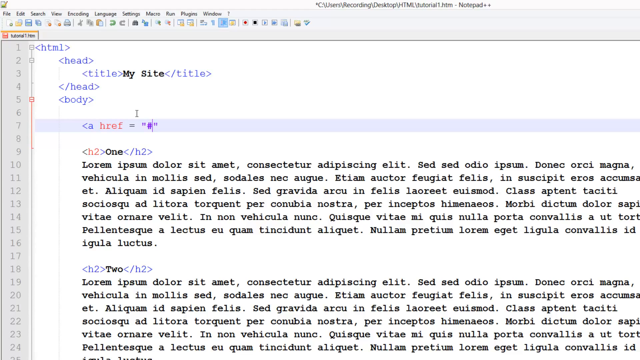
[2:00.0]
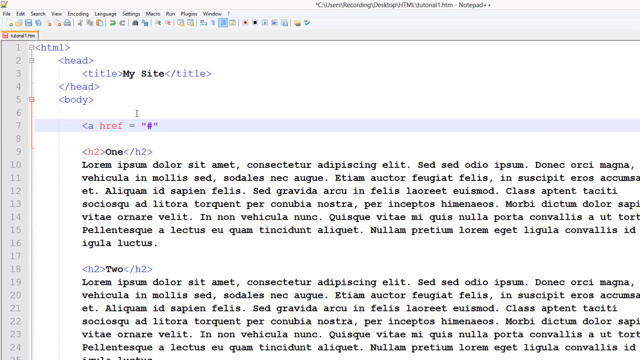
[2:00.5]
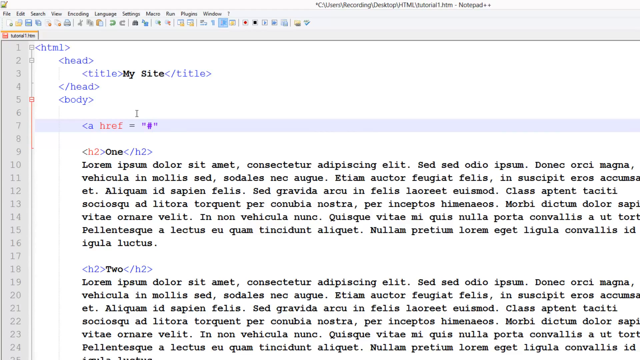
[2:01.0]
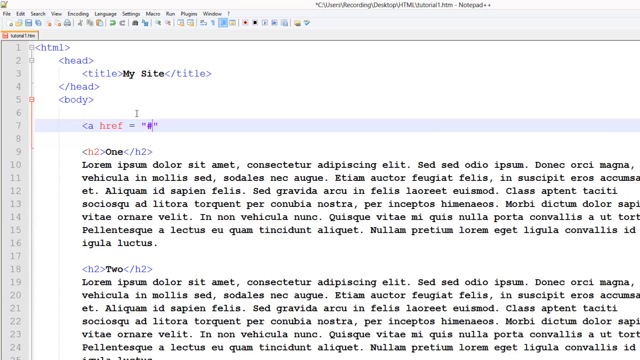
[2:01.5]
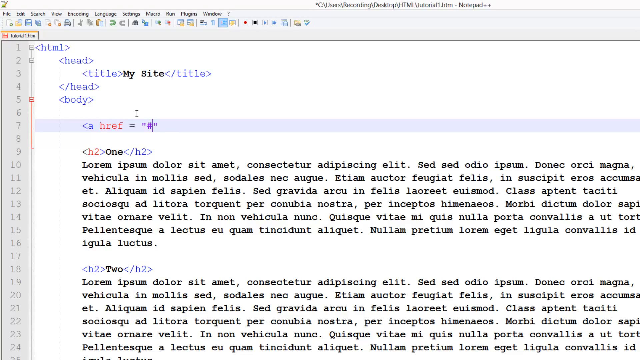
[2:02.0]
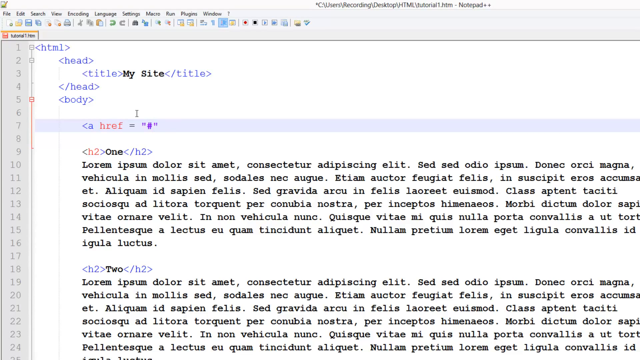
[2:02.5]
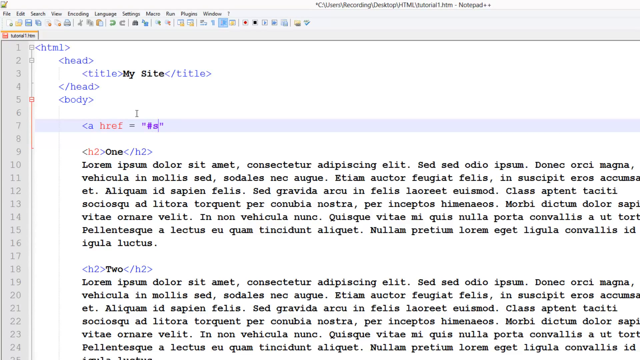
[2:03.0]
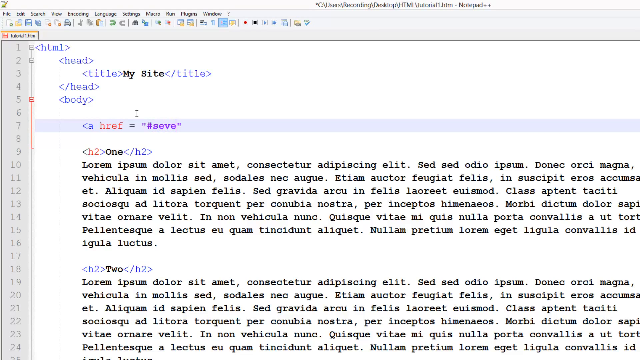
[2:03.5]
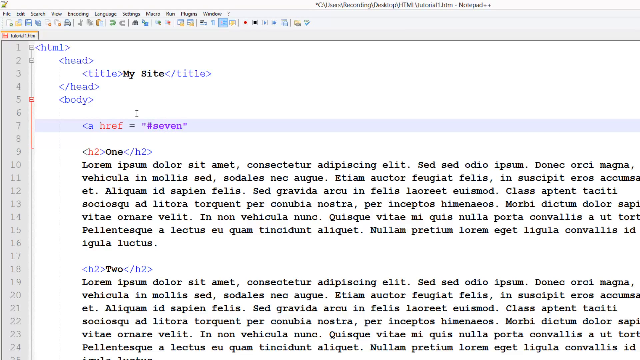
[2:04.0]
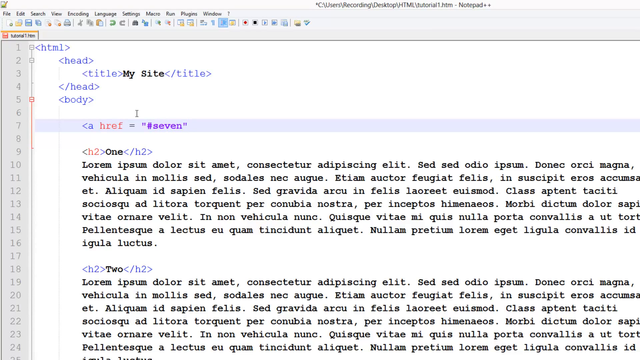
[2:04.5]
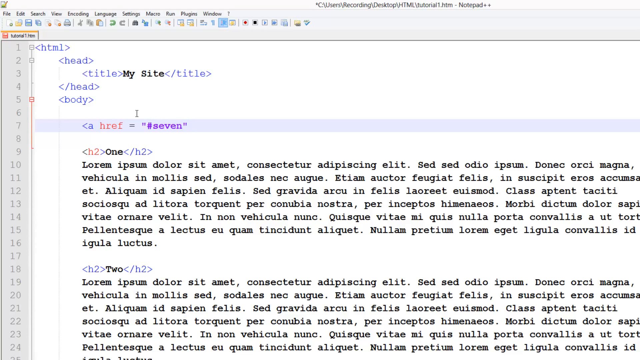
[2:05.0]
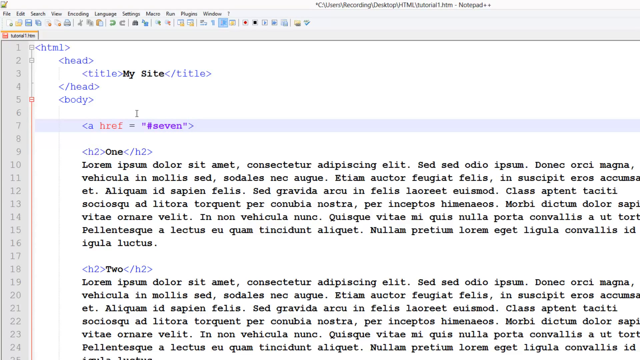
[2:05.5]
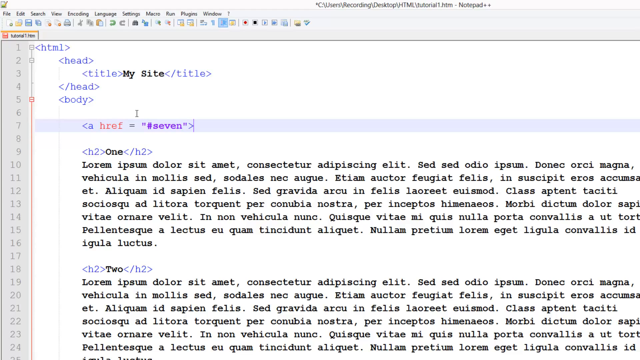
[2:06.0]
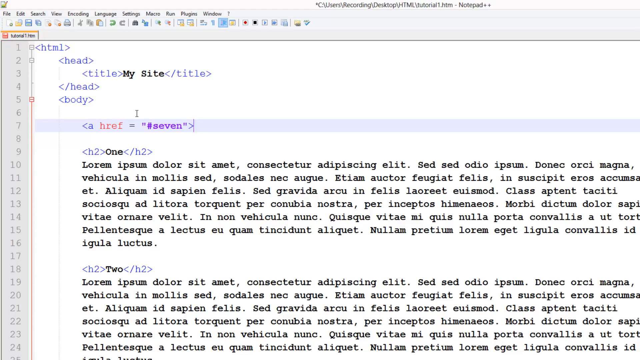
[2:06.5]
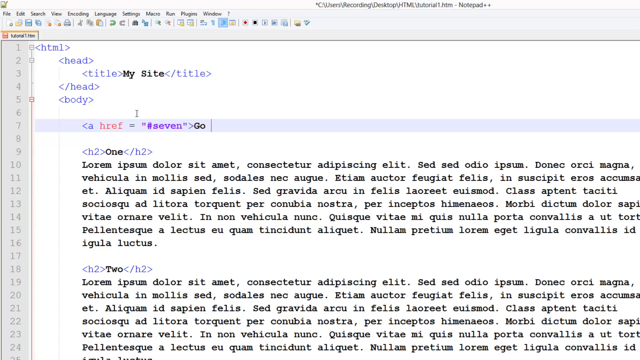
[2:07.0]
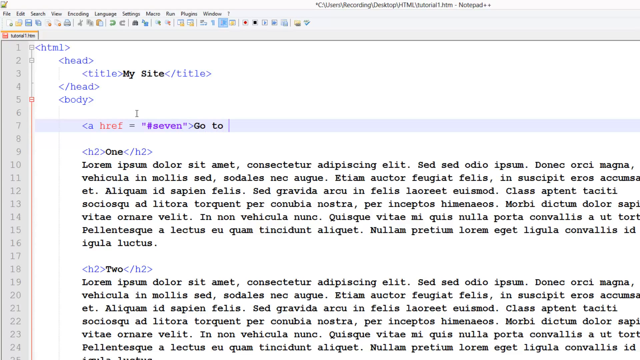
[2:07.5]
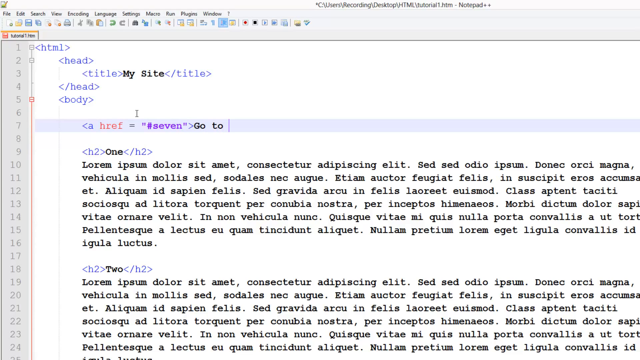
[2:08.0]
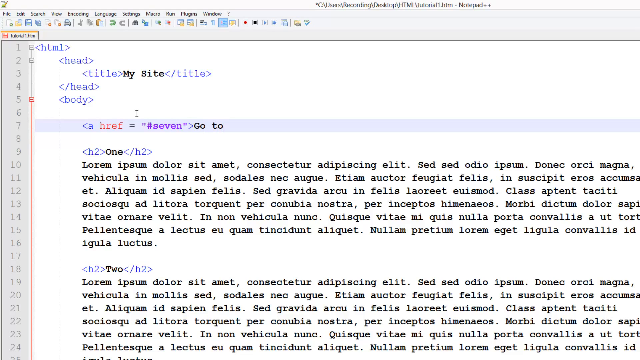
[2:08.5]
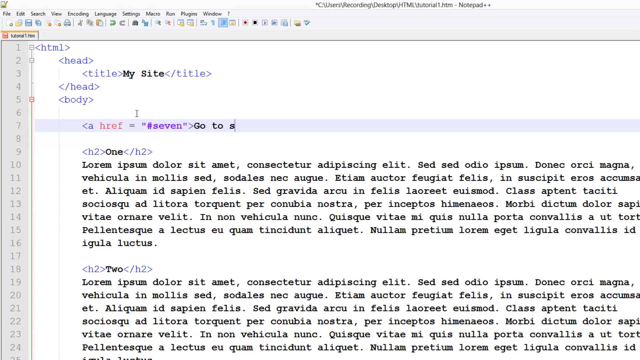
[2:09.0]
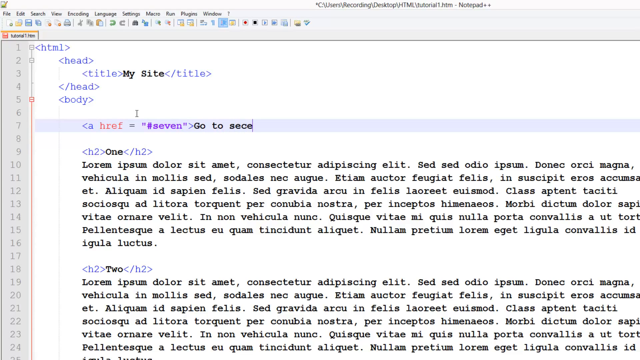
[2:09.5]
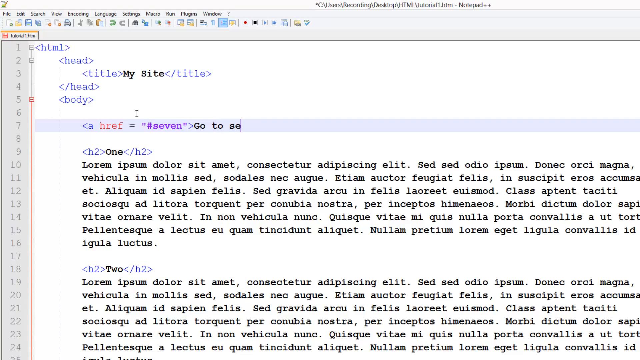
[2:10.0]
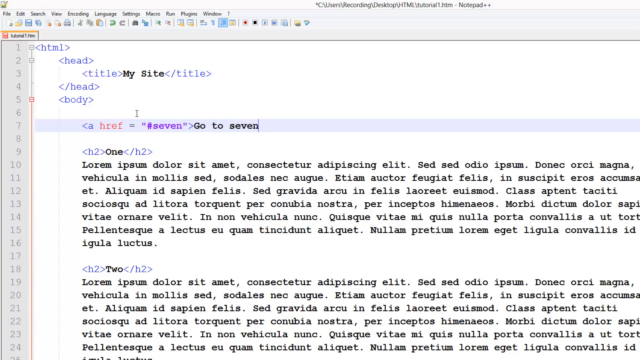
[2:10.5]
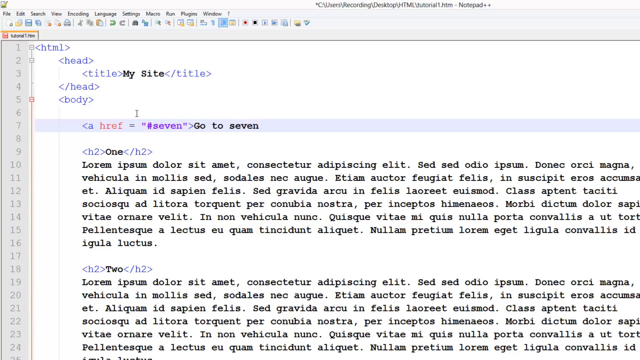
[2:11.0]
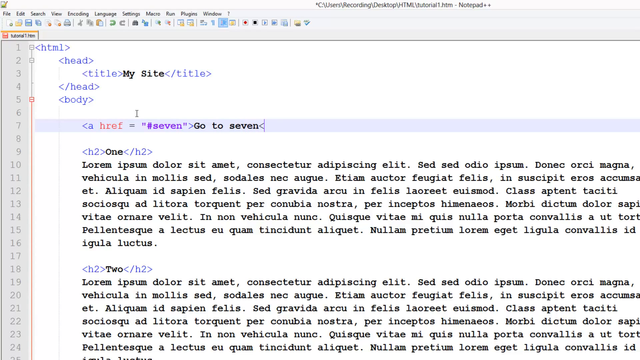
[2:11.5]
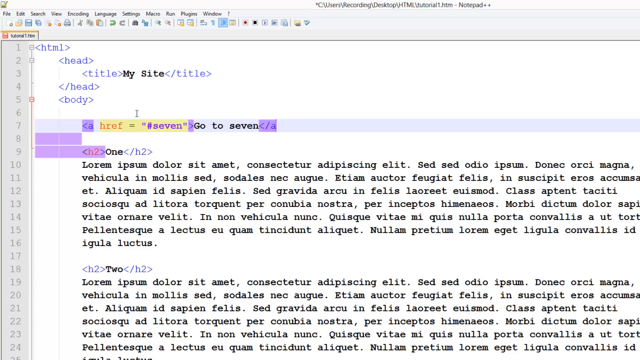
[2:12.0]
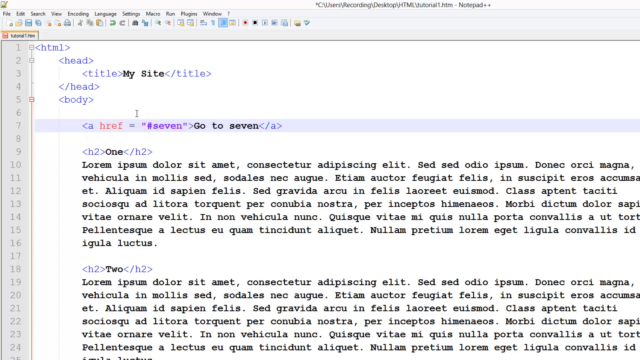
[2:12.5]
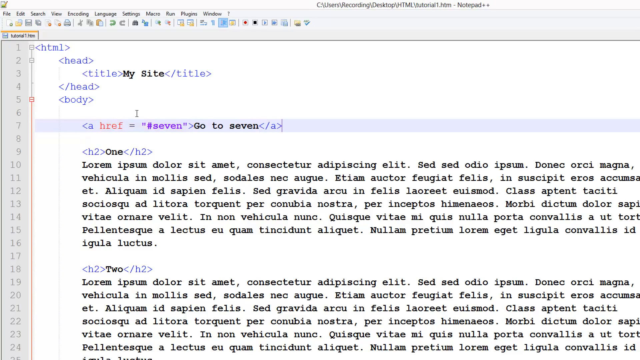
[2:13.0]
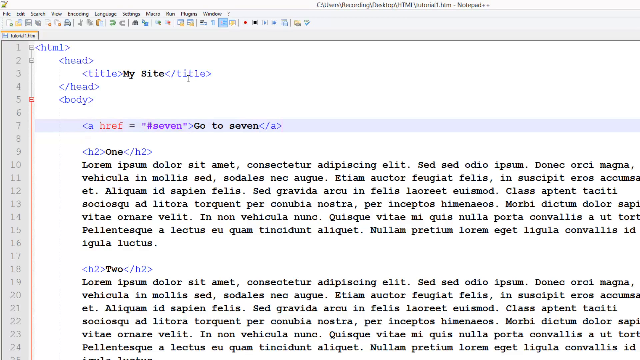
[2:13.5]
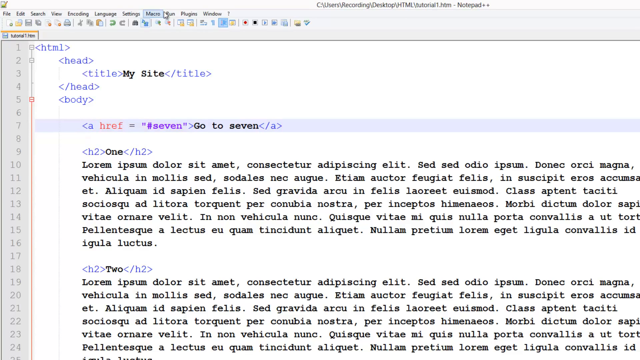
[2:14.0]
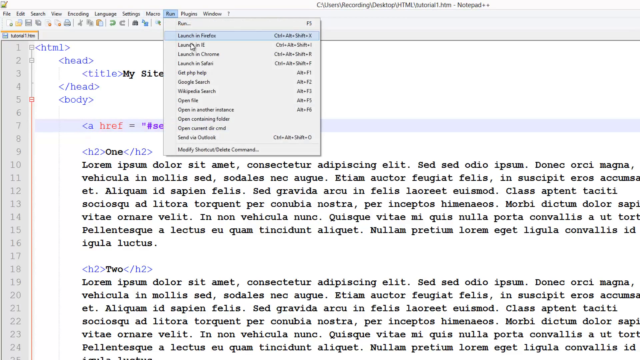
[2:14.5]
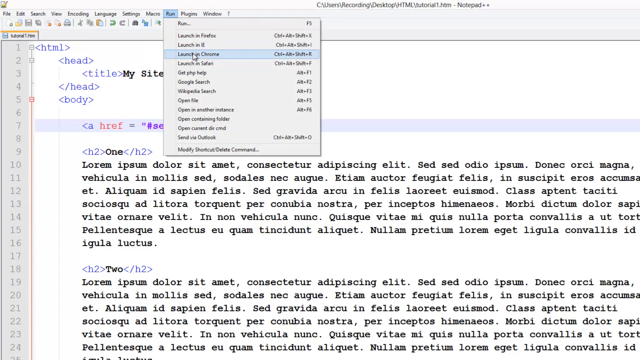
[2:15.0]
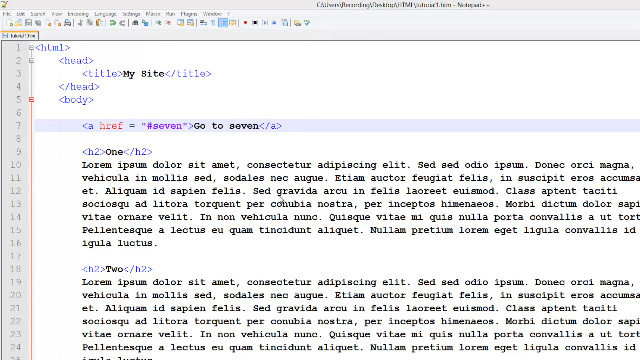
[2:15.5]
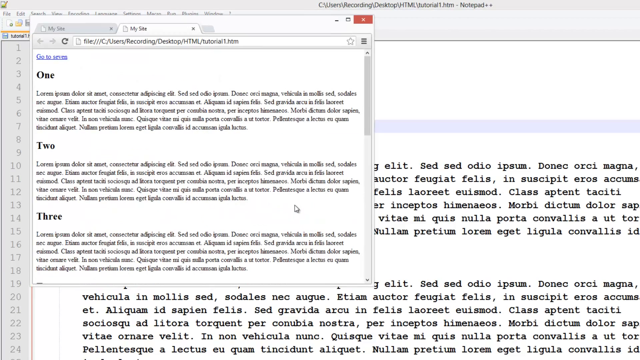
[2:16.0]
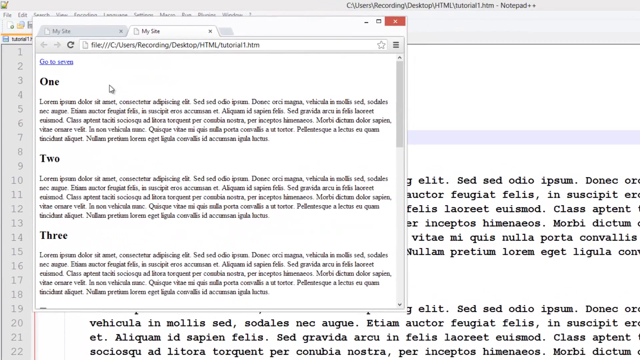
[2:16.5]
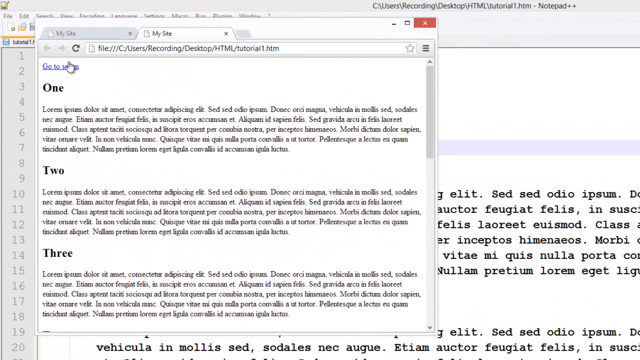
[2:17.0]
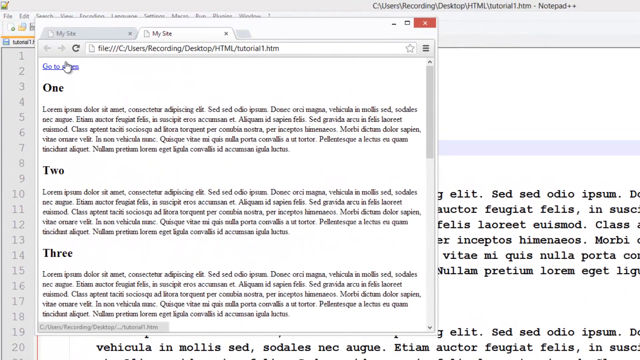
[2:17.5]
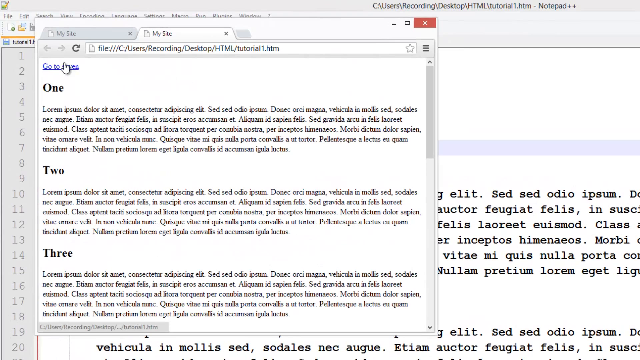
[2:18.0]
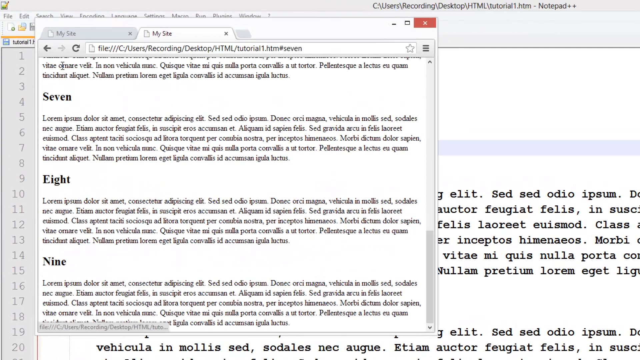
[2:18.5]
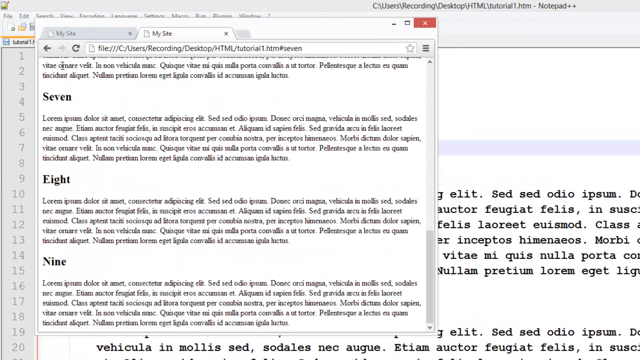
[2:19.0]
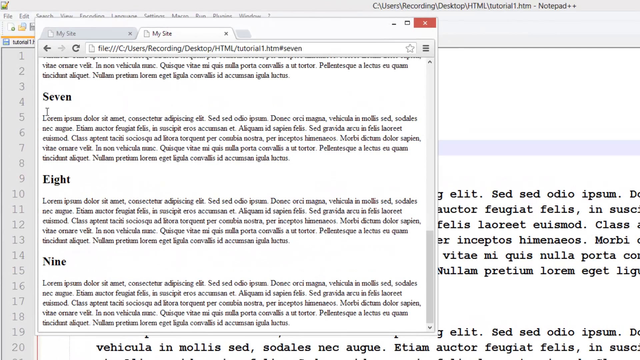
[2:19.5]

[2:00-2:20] The person is still working on the HTML, apparently on line seven. Between the quotation marks, "seven" appears to have been typed in purple, followed possibly by equal signs and a greater-than symbol on the right-hand side. Then there is some space, a seven, and with no space a purple bracket with a slash and "a," then a closing bracket. The person moves up and clicks on something small and unclear, possibly "run"; an M is visible to its left, maybe for a menu. The screen is small and not zoomed in. Another file opens, showing seven and certain numbers typed in bold.